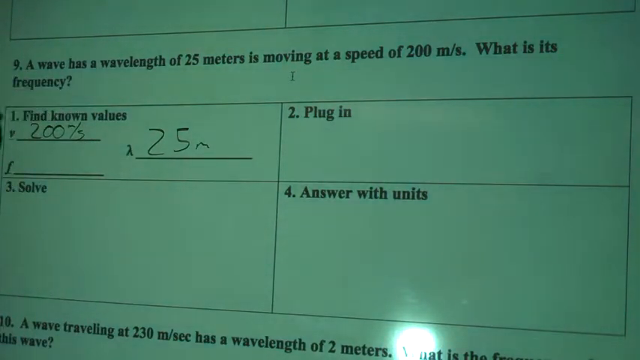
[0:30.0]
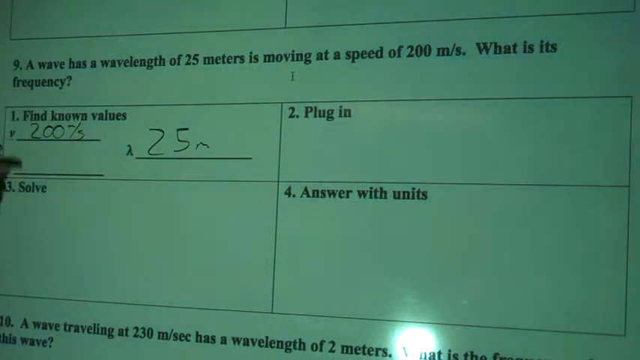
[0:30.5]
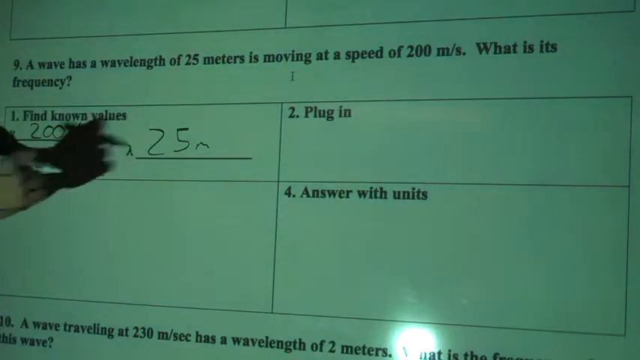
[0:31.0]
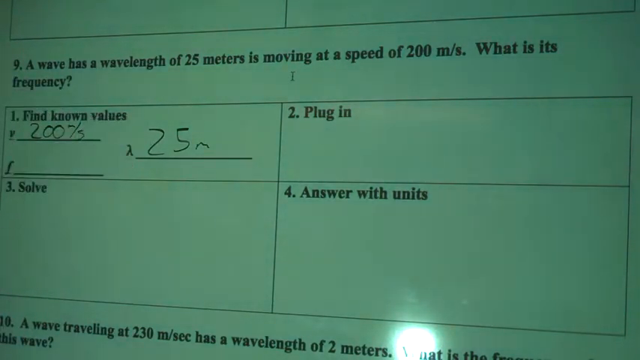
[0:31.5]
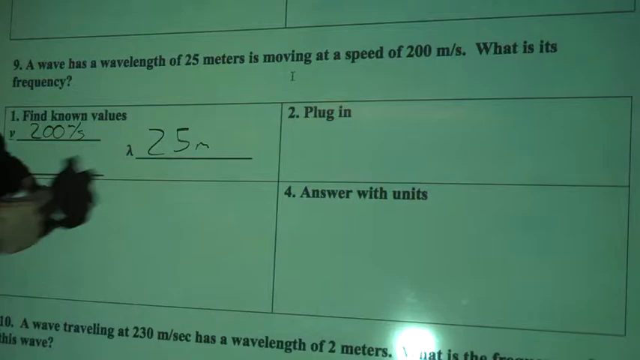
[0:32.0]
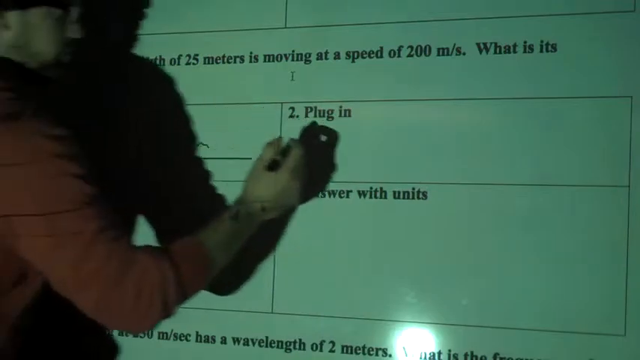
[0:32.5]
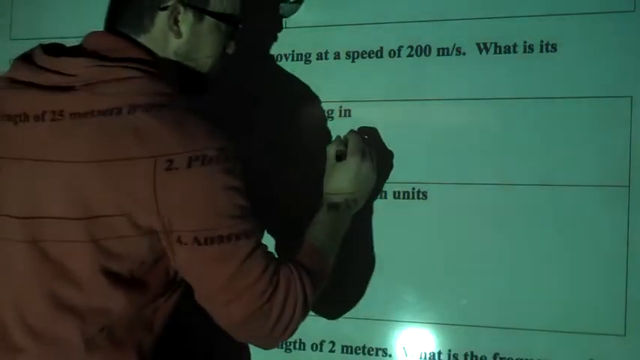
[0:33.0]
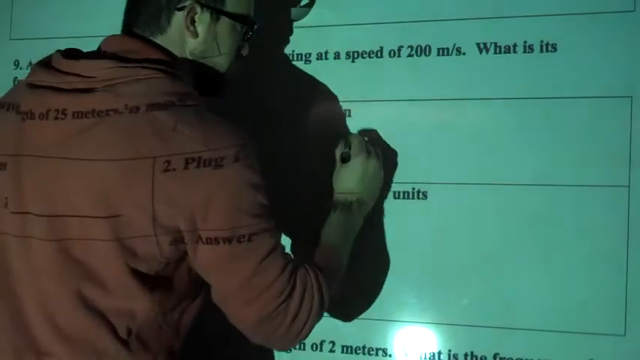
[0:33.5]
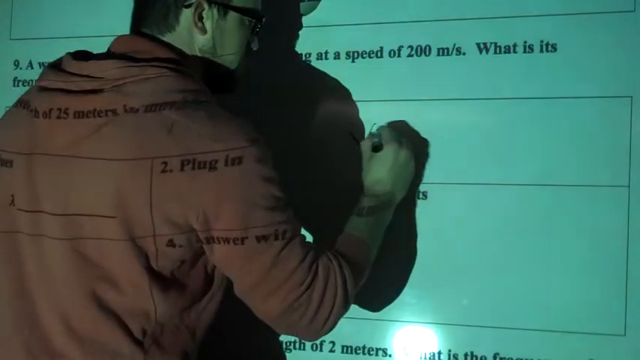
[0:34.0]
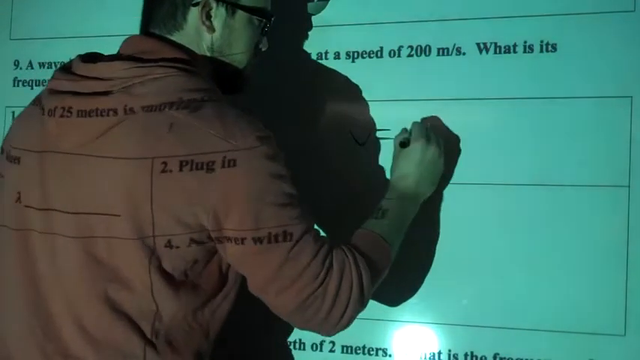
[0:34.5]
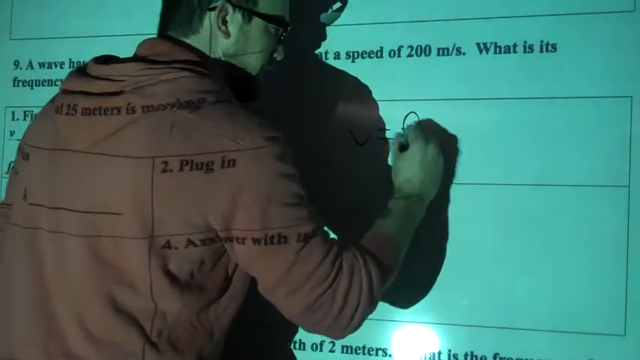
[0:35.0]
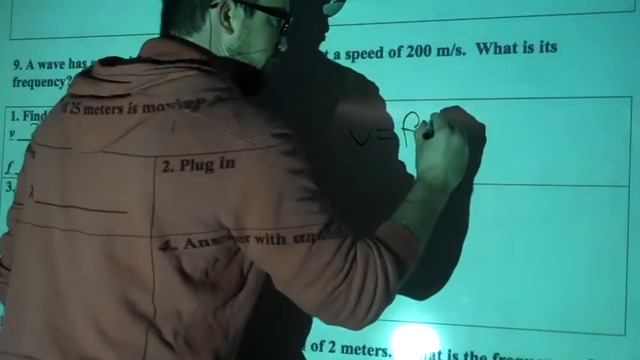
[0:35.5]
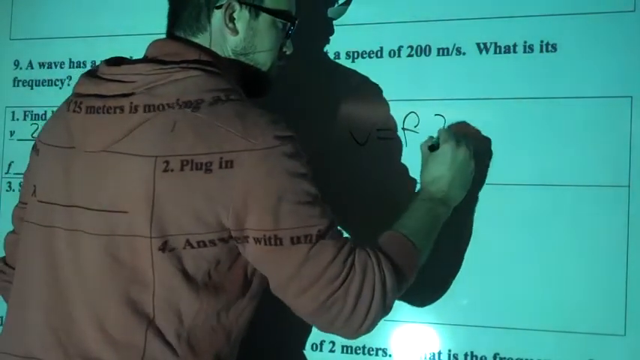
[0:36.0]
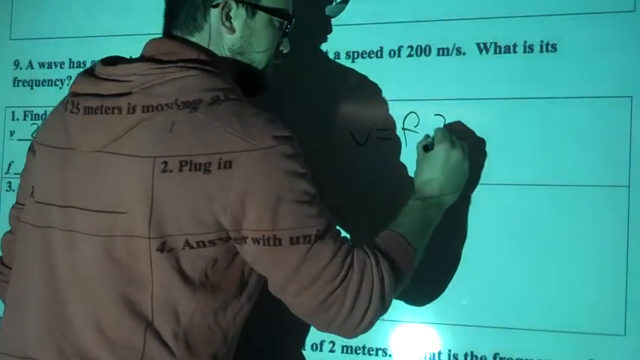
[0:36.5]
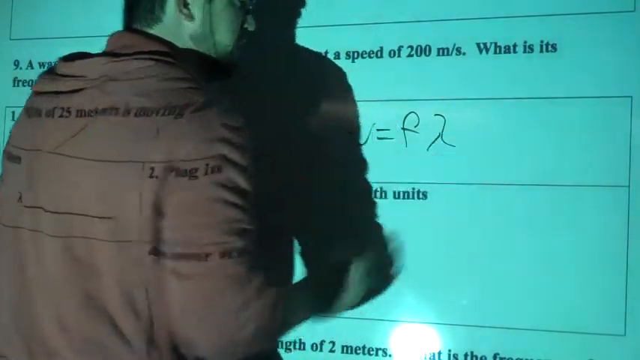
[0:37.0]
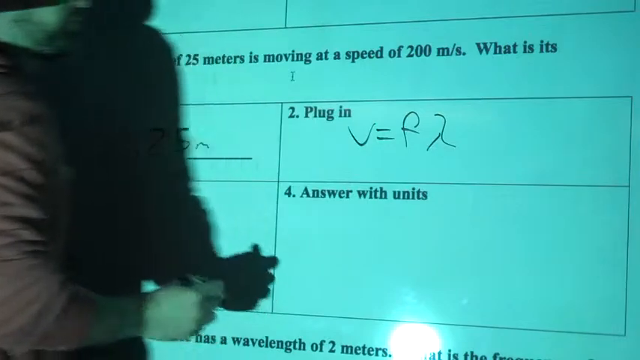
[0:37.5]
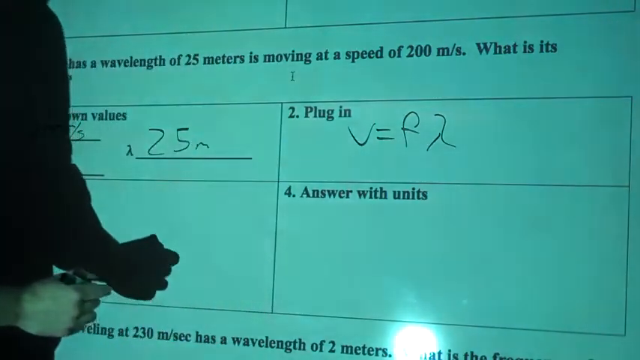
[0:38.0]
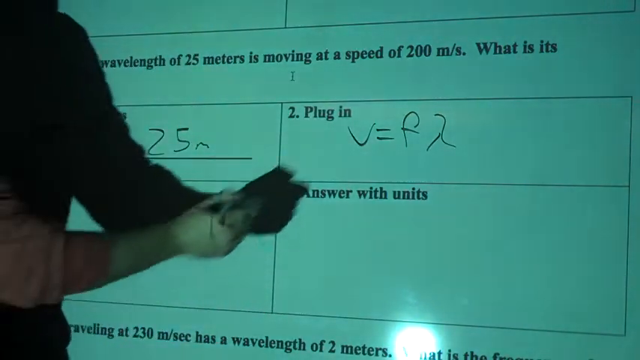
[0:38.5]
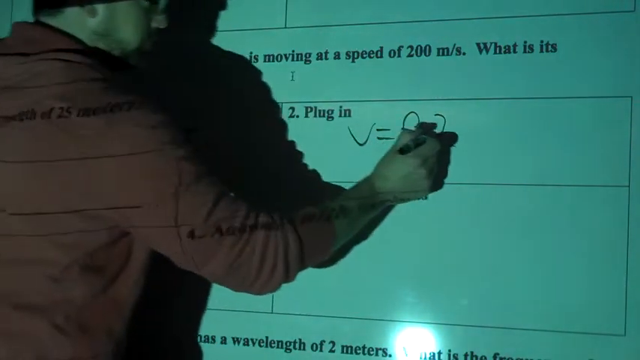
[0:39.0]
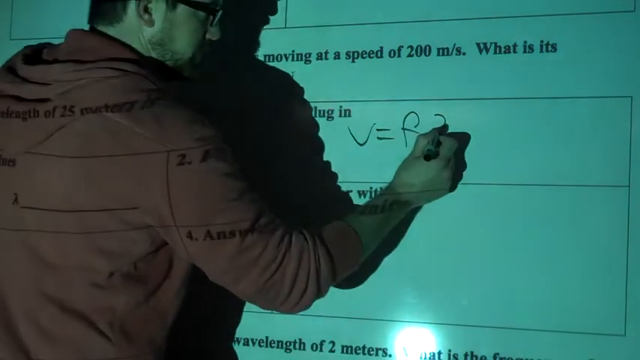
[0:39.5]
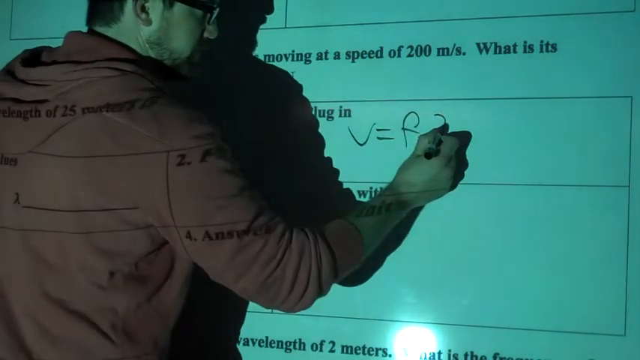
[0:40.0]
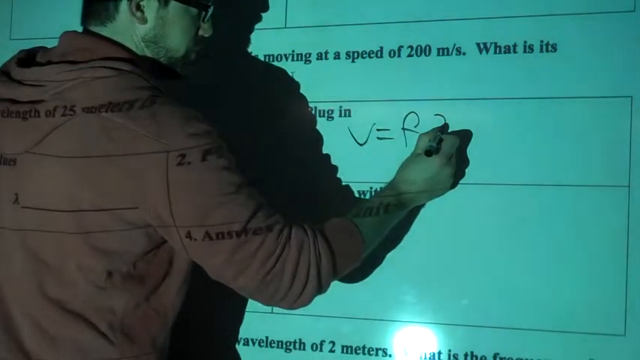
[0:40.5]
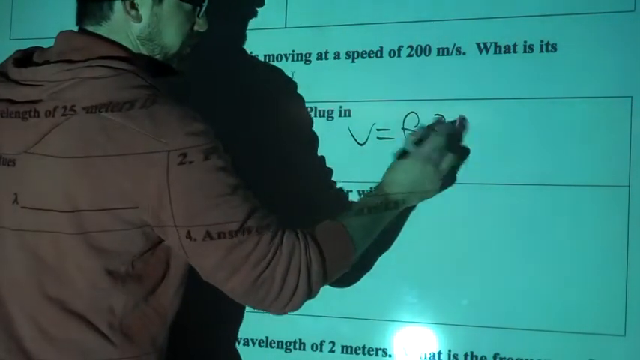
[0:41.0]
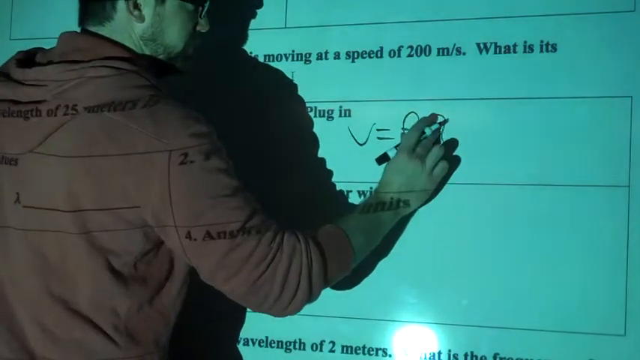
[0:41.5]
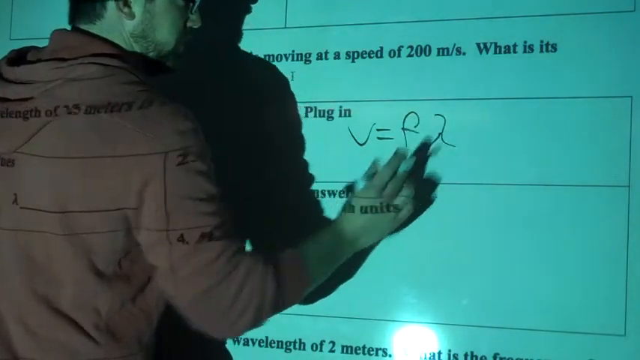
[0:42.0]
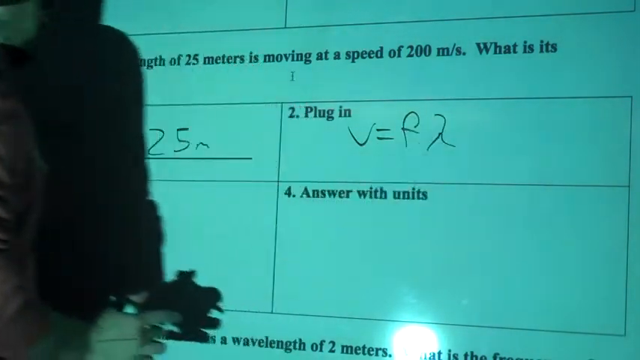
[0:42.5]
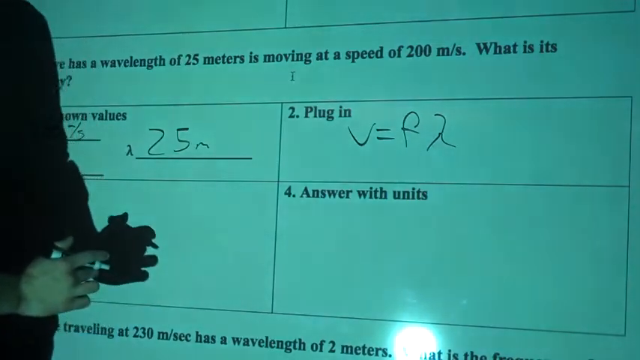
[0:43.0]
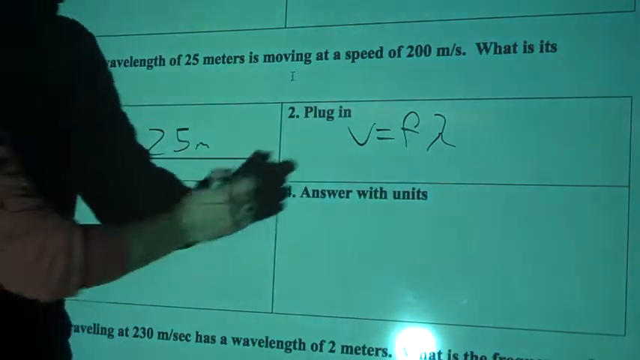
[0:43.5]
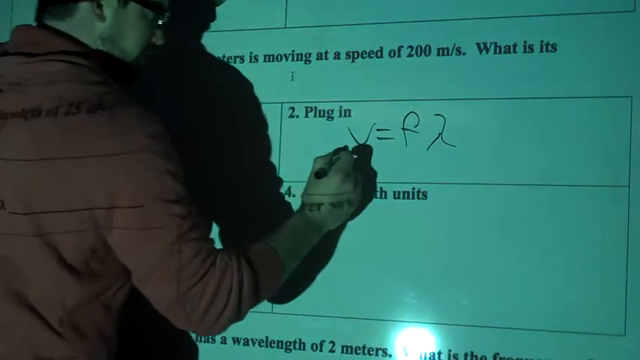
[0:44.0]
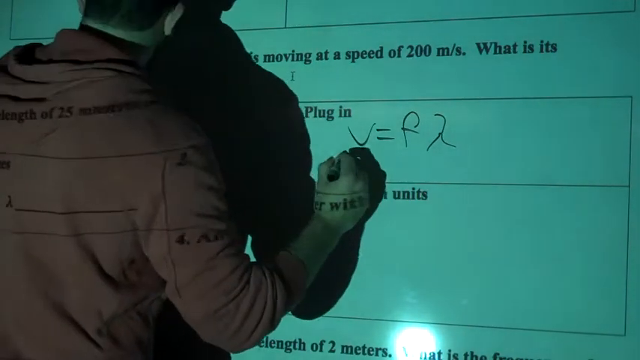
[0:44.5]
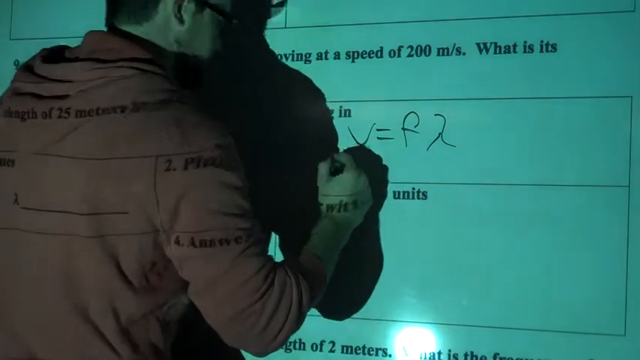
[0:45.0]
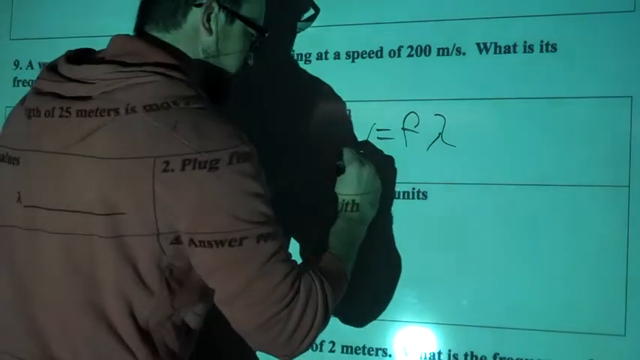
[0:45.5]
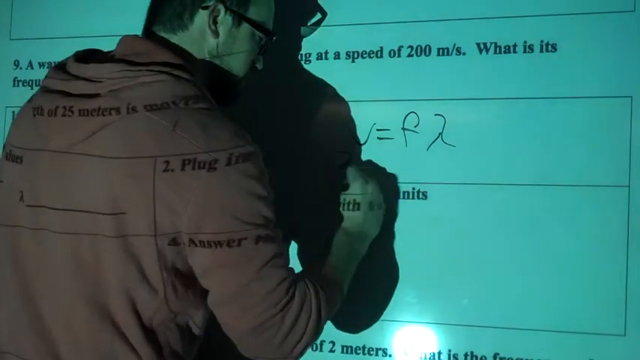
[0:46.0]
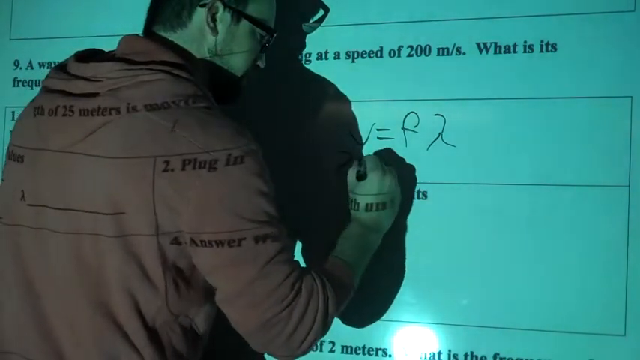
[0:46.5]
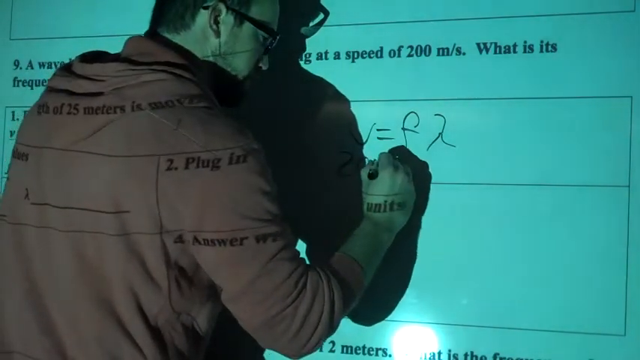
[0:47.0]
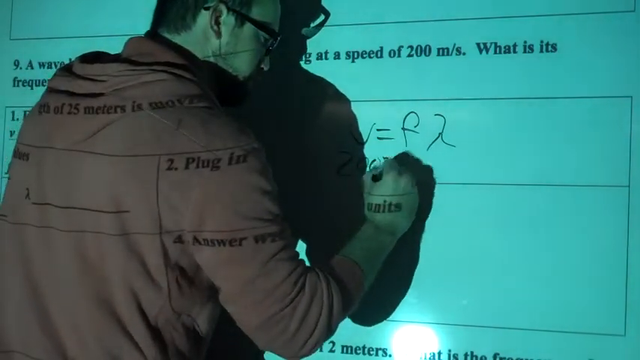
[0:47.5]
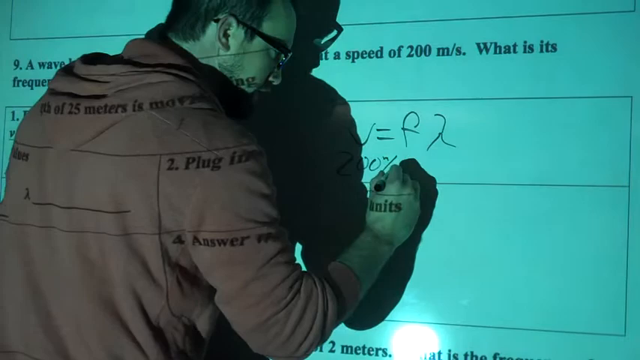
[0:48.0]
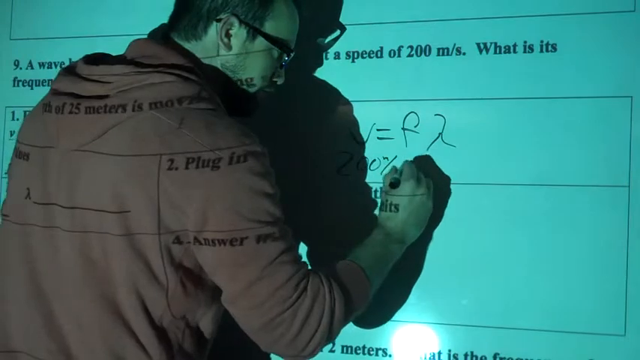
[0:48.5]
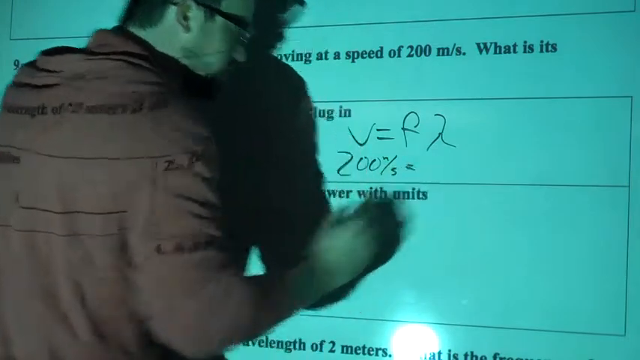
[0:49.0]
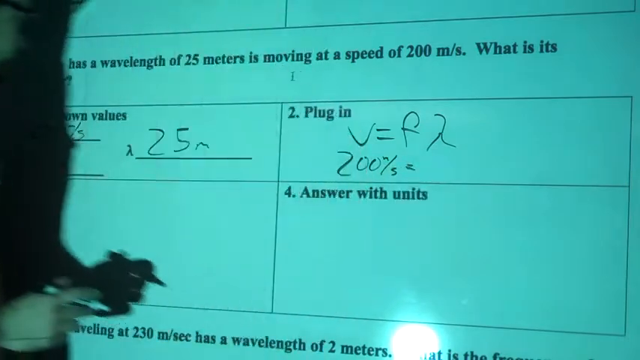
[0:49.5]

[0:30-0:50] The same question stays on screen, and the professor is now visible as he continues answering. In the second box he writes V equals what seems to be F, followed by a symbol that looks like an upside-down Y, and beneath it he writes "200 miles per second equals" without finishing the rest. An empty space remains in the first answer box, so he seems to have skipped its third part. He keeps writing.